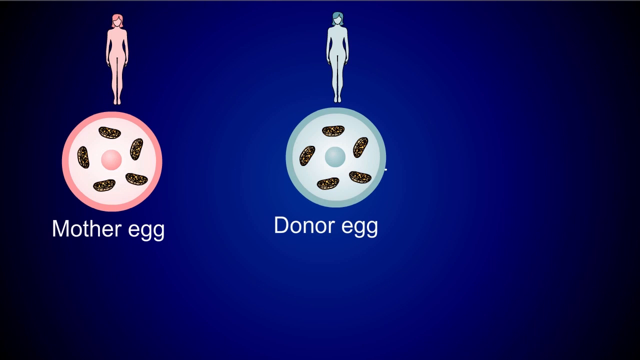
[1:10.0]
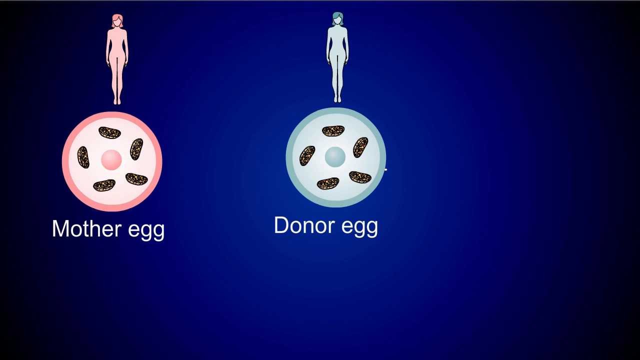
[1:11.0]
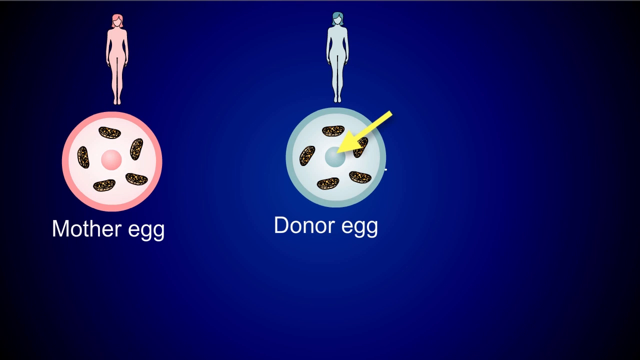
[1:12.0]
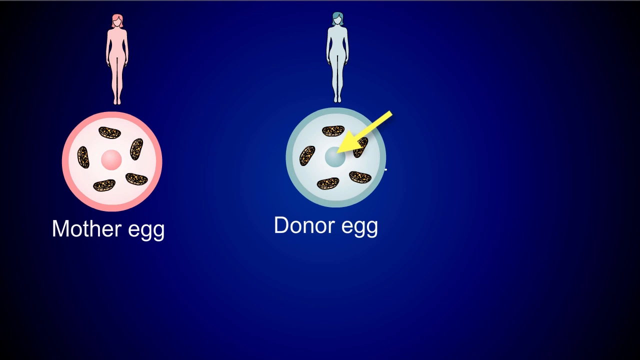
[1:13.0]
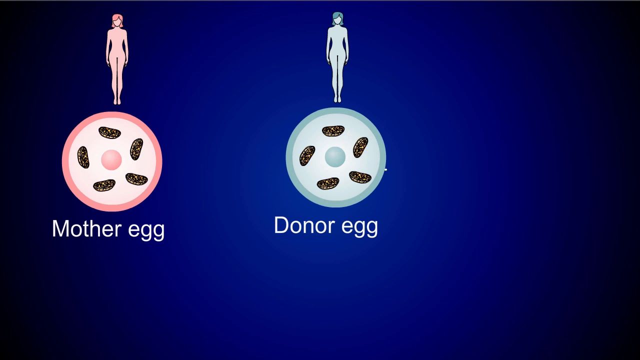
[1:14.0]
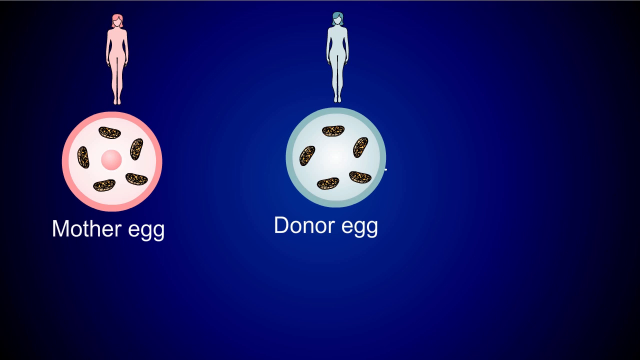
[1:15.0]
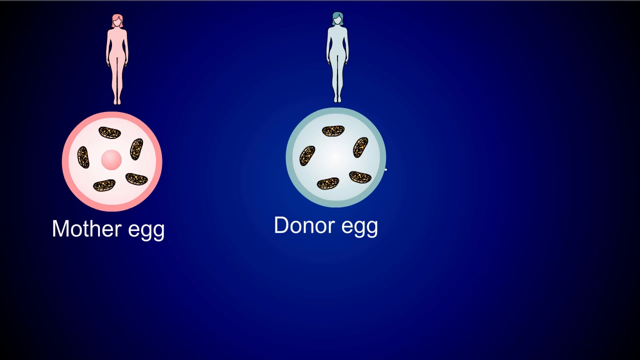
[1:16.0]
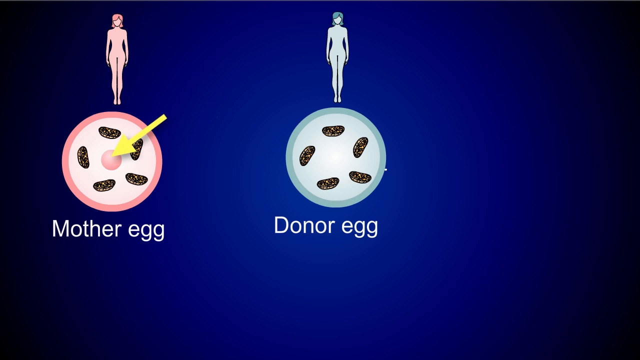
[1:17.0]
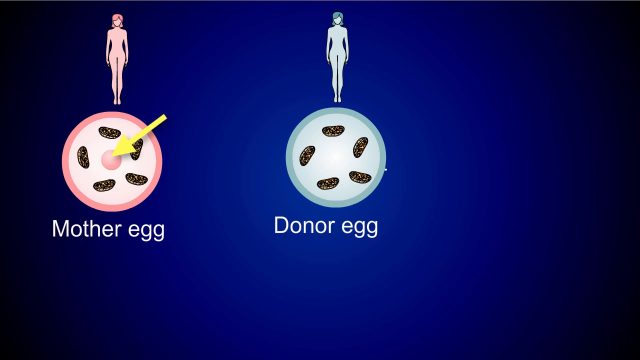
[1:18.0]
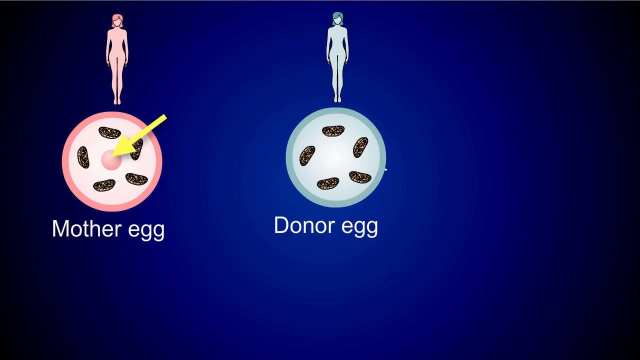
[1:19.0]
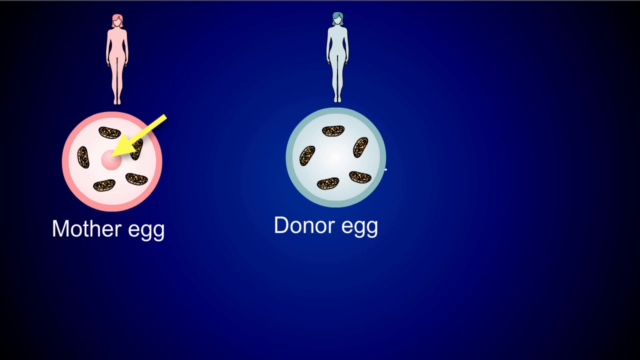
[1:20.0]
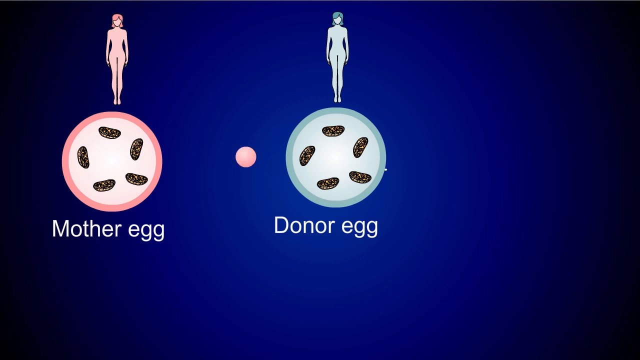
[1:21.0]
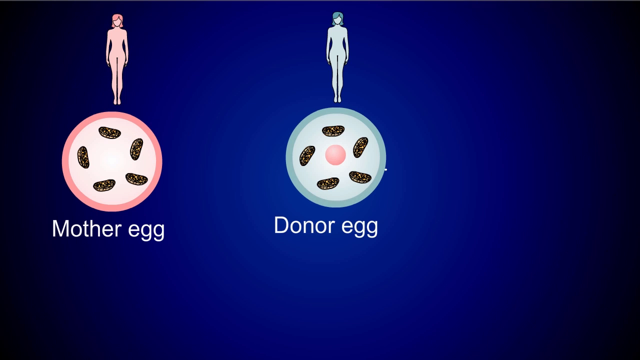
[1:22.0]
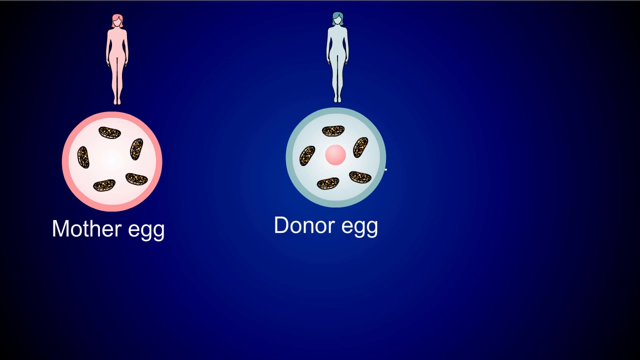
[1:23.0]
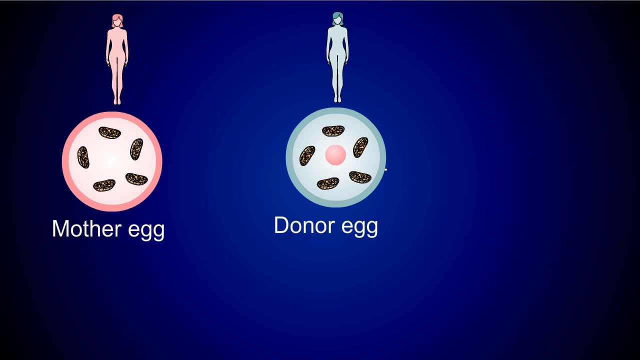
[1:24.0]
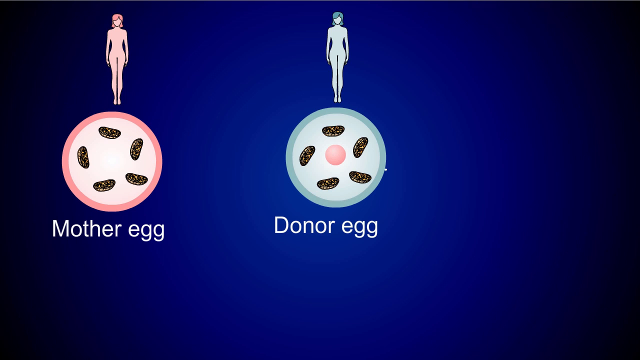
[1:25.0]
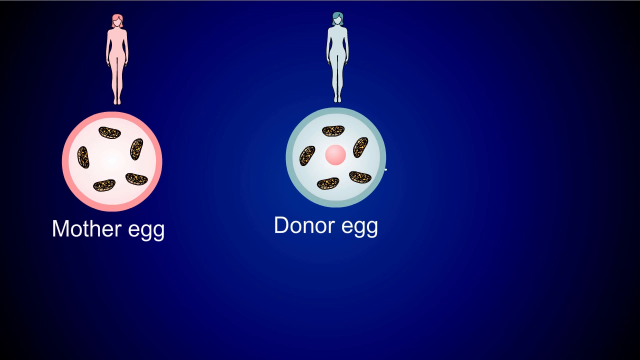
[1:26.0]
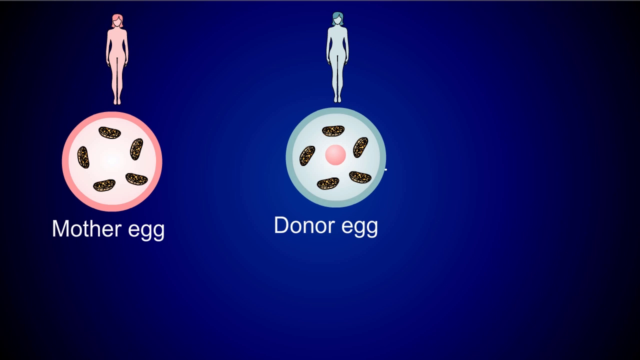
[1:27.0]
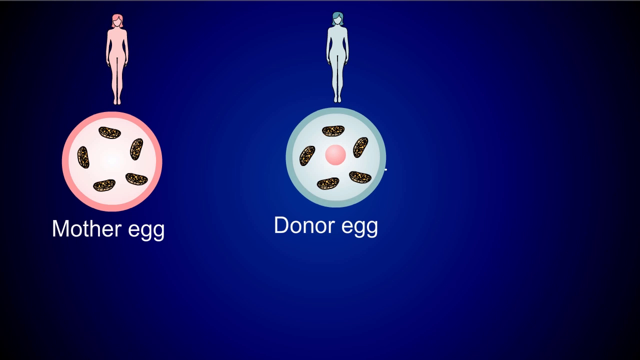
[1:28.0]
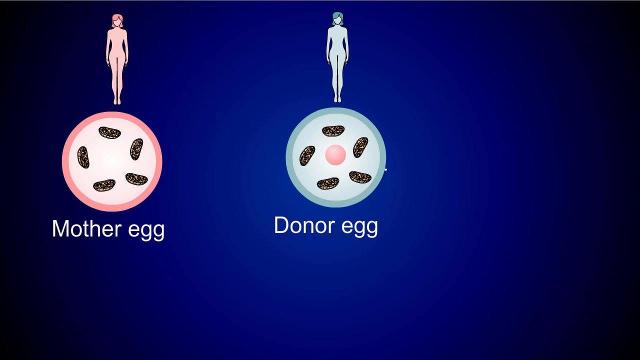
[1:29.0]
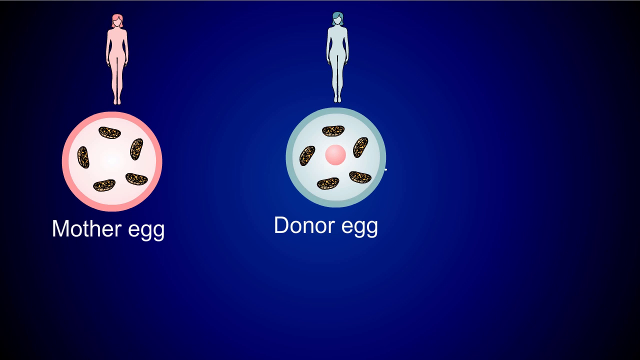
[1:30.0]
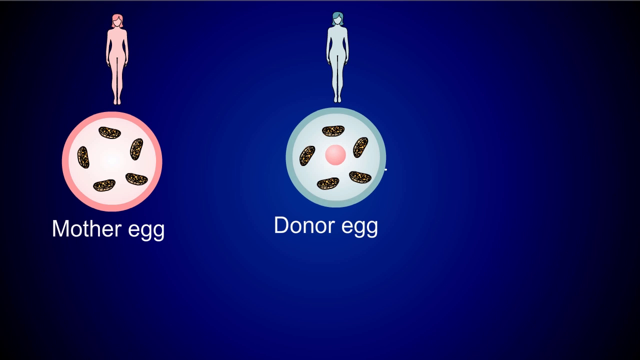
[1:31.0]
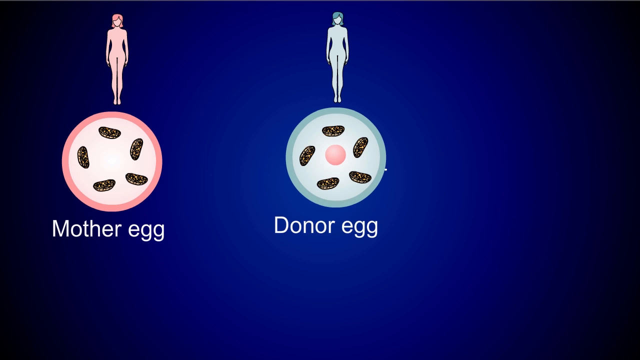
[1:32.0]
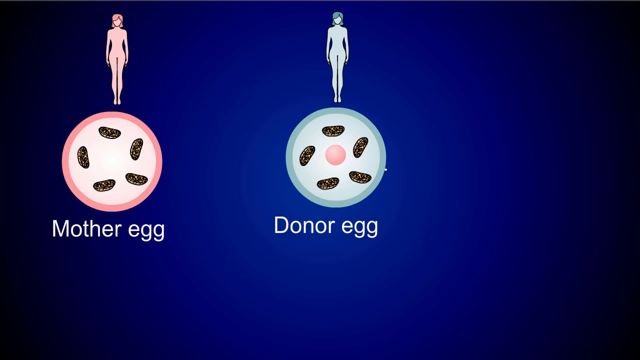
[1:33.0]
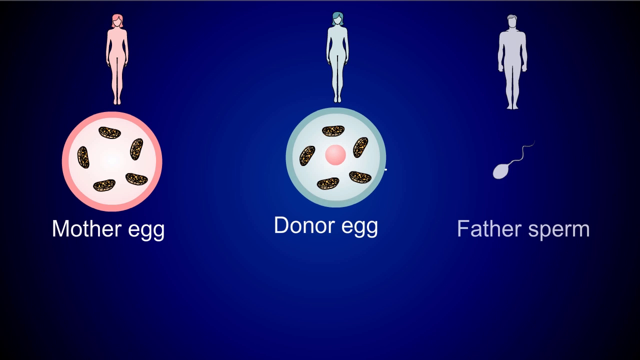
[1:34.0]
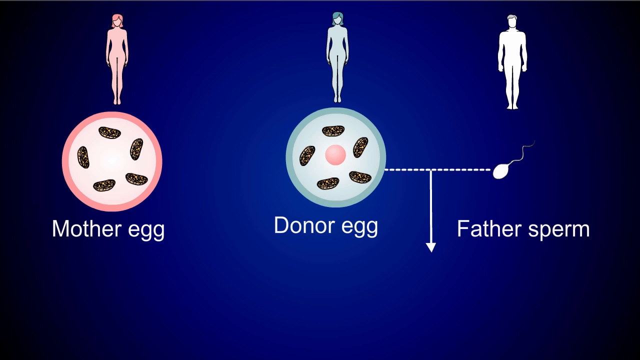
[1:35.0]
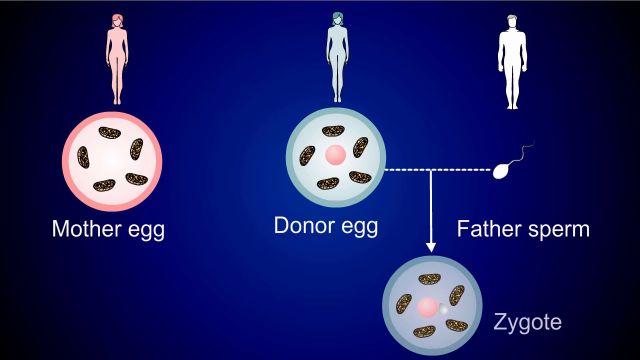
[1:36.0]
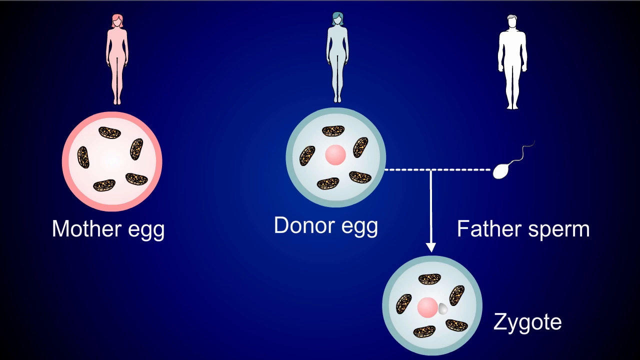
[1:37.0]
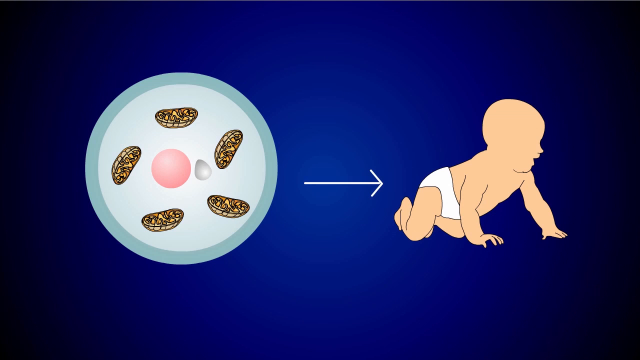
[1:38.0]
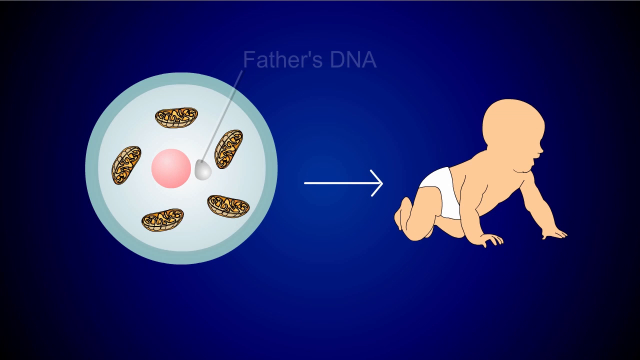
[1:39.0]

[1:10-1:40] An animated picture shows a mother egg on the left and a donor egg on the right, with silhouettes of a woman in pink on the left and a woman in blue on the right. The very center of each egg is pointed to. The blue center is taken out, and the pink one is transferred into the middle of the blue donor egg, leaving a blue cell with a pink inner lining. The donor egg is then connected to the father's sperm by a drawn line, and a man is now drawn in the upper right-hand corner. An arrow points down, showing fertilization taking place between the donor egg and the father's sperm. The father's DNA is shown, followed by a picture of the baby in the diaper.